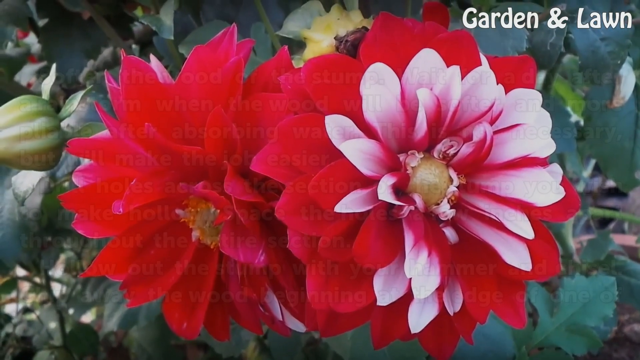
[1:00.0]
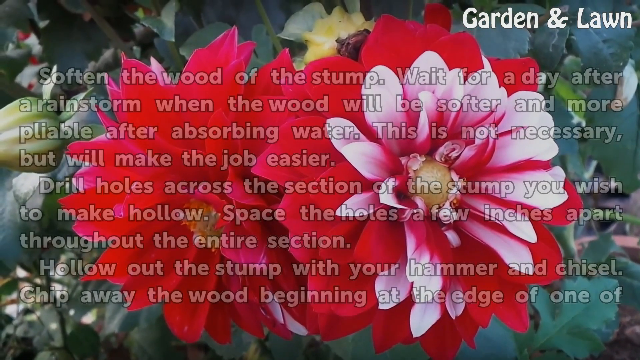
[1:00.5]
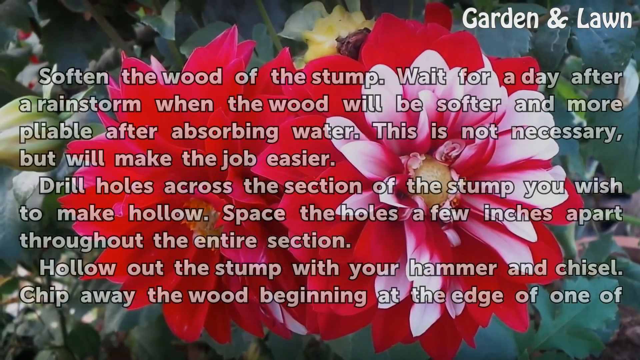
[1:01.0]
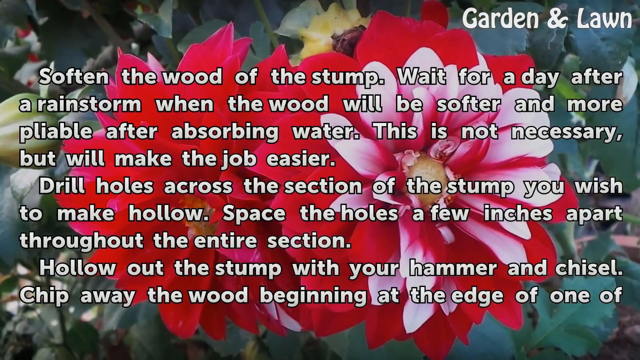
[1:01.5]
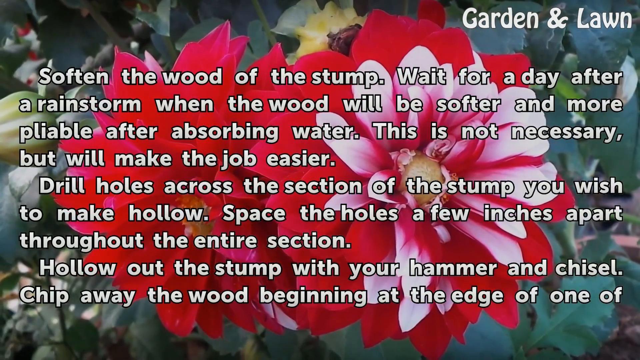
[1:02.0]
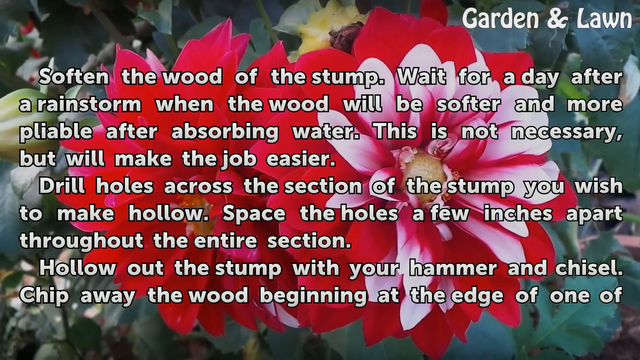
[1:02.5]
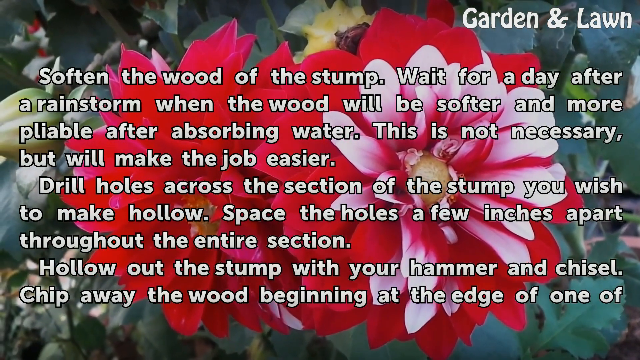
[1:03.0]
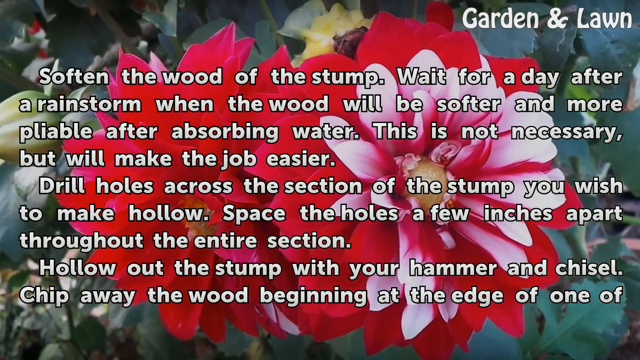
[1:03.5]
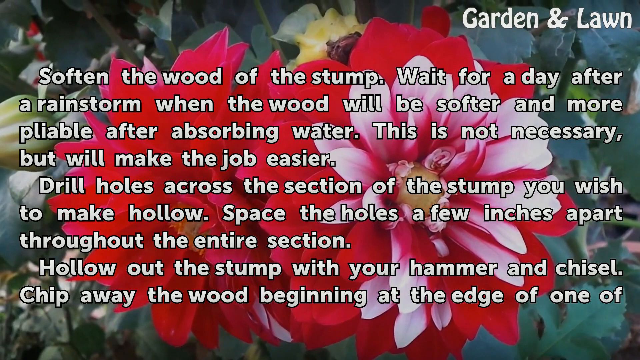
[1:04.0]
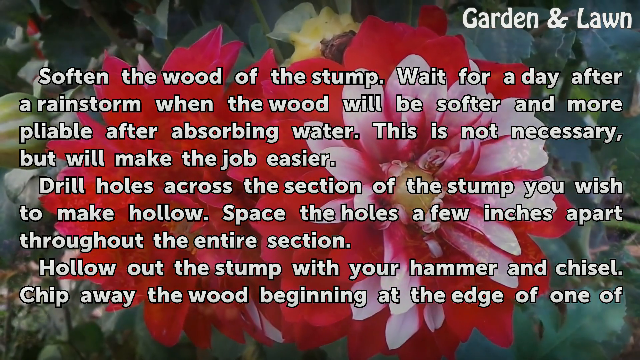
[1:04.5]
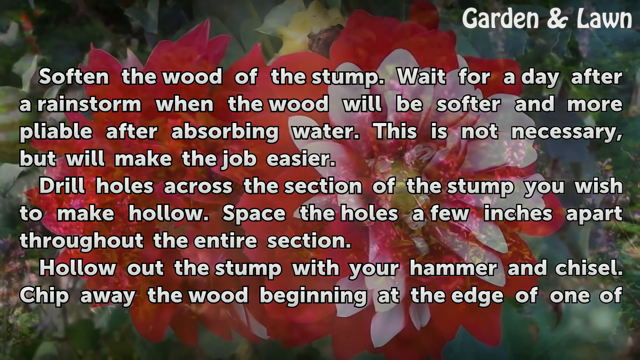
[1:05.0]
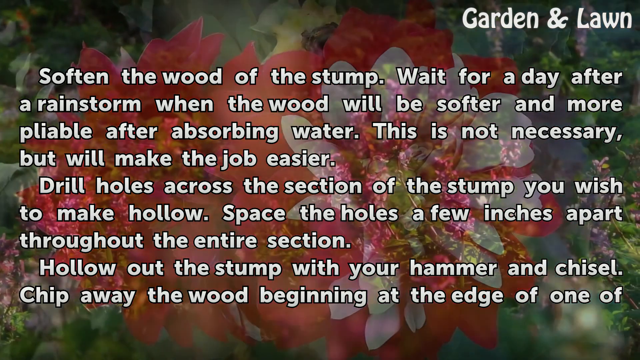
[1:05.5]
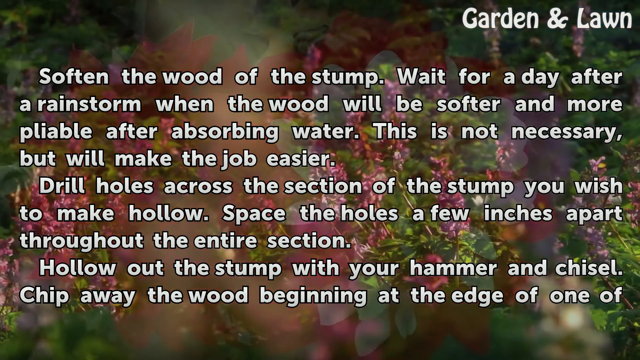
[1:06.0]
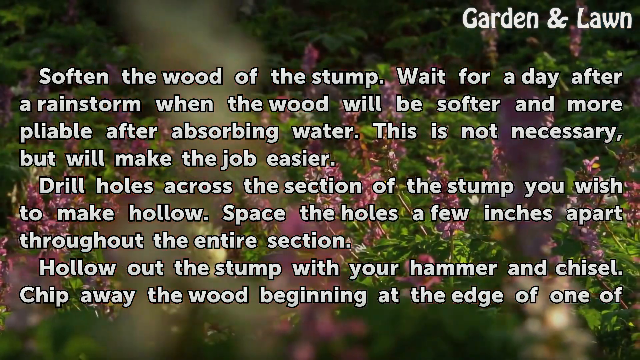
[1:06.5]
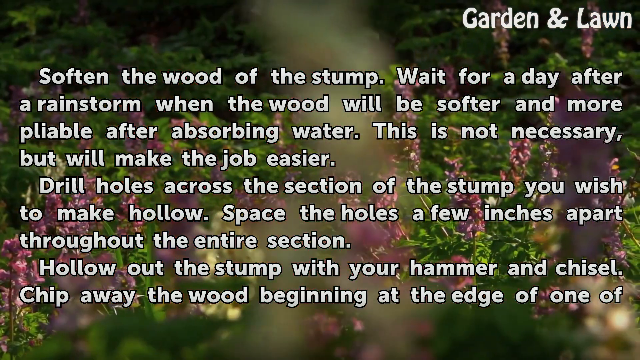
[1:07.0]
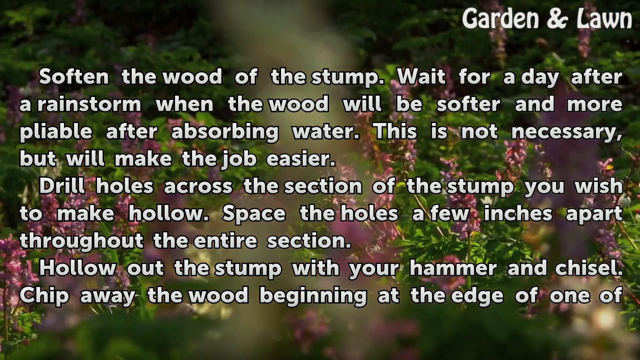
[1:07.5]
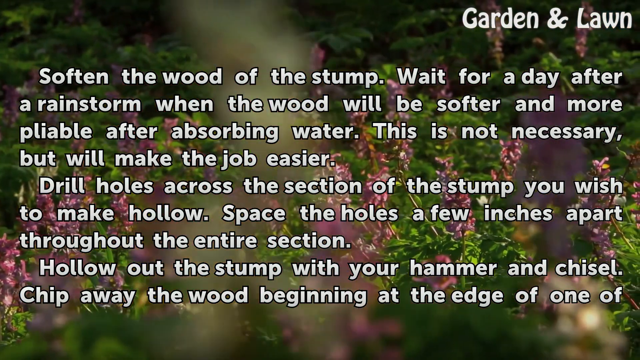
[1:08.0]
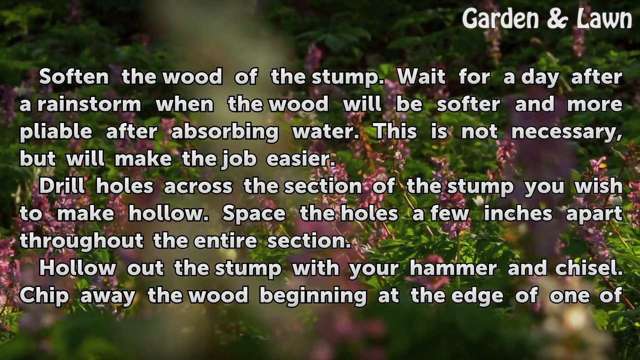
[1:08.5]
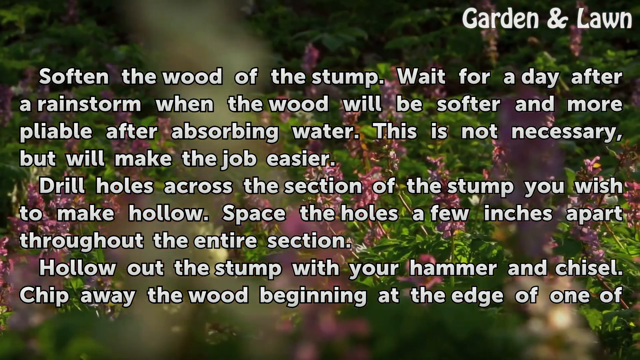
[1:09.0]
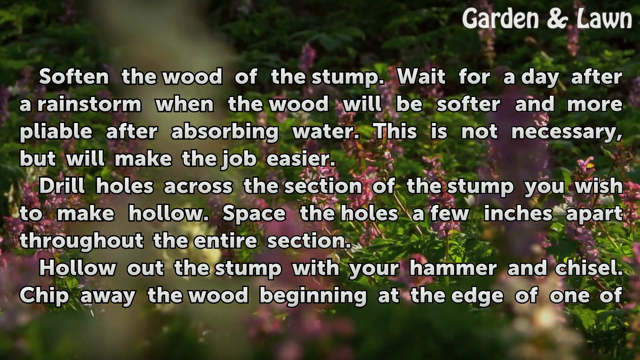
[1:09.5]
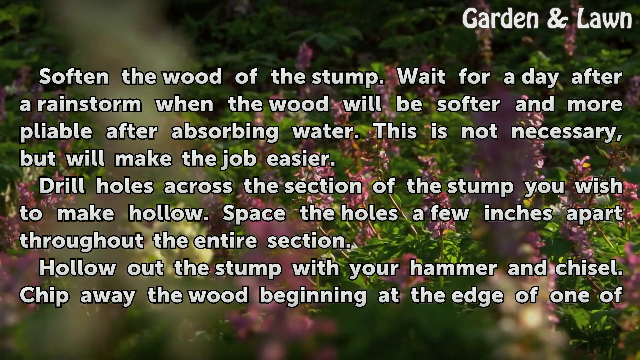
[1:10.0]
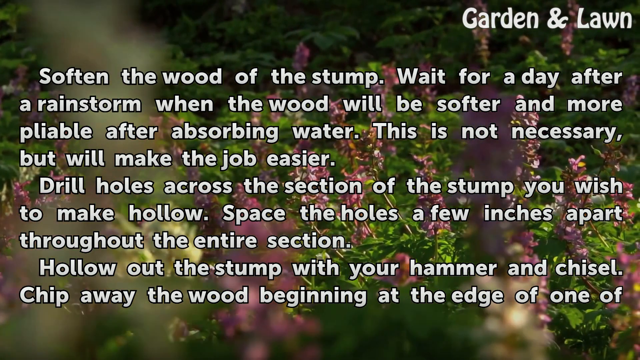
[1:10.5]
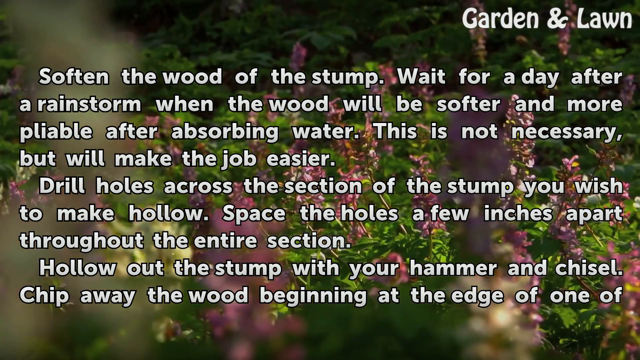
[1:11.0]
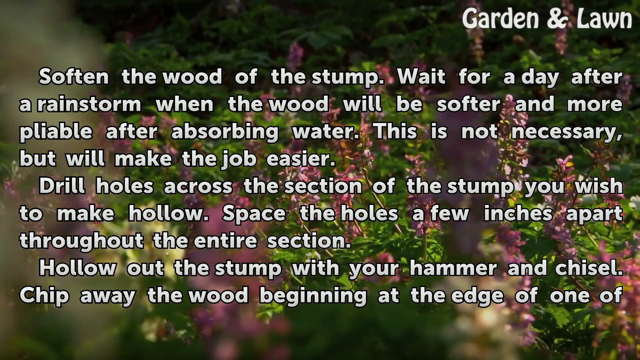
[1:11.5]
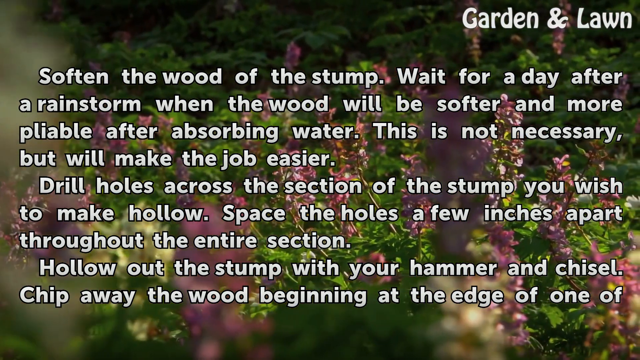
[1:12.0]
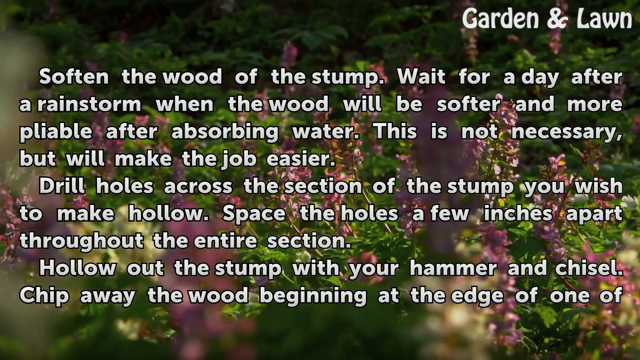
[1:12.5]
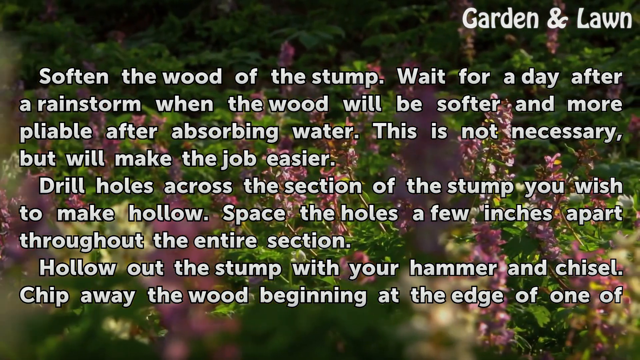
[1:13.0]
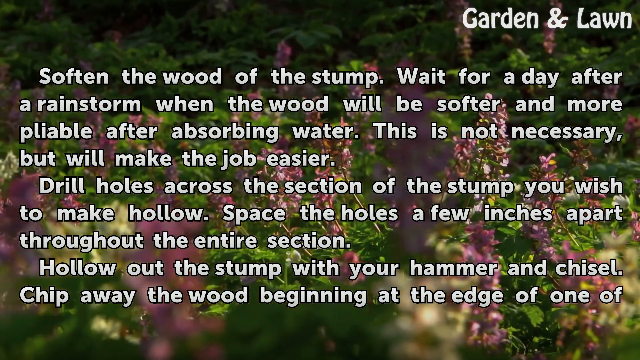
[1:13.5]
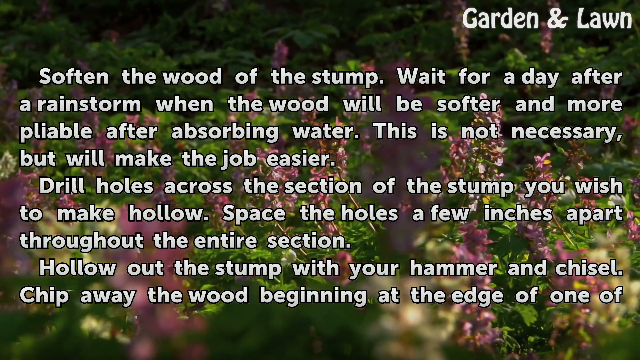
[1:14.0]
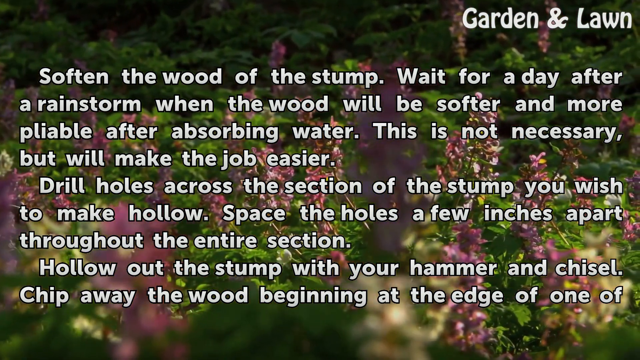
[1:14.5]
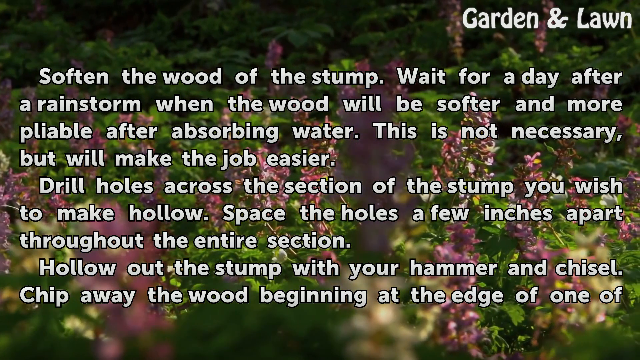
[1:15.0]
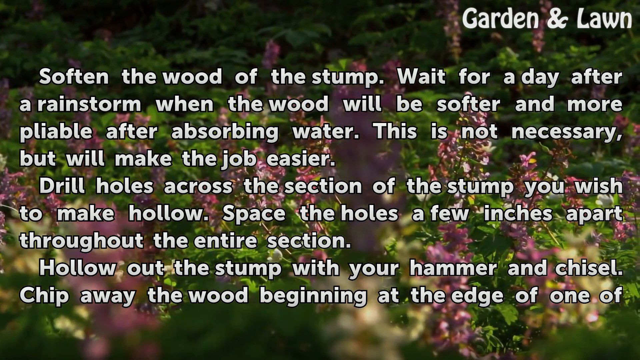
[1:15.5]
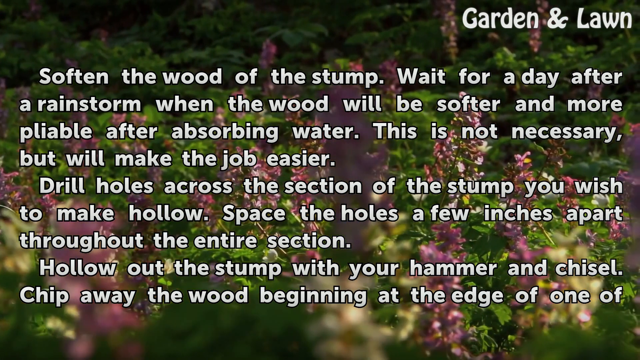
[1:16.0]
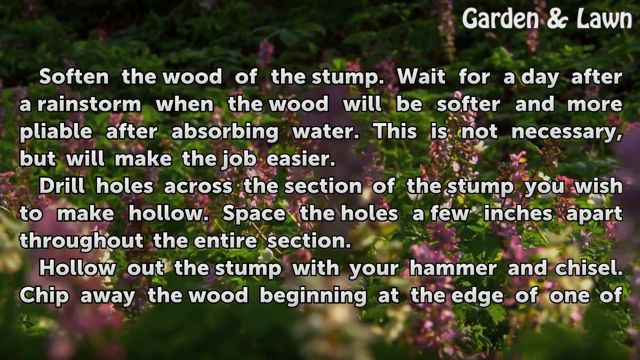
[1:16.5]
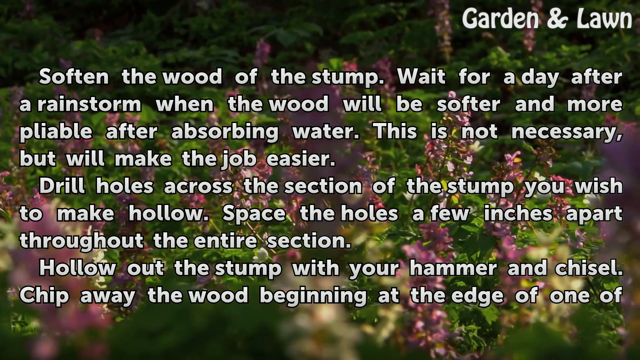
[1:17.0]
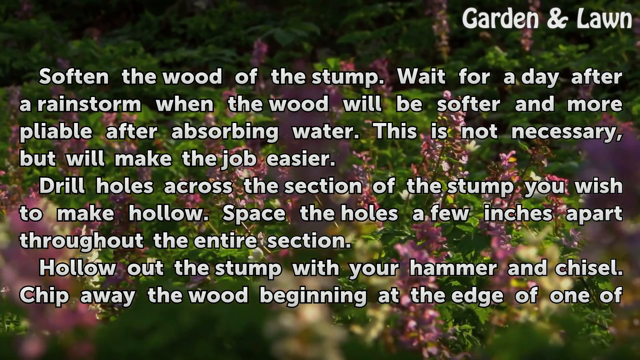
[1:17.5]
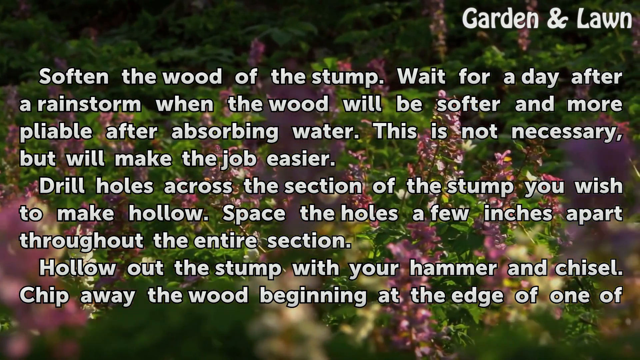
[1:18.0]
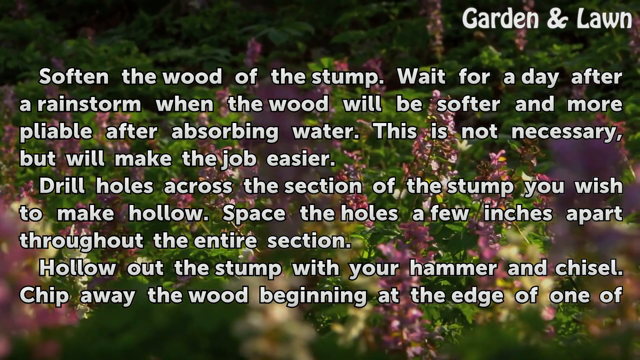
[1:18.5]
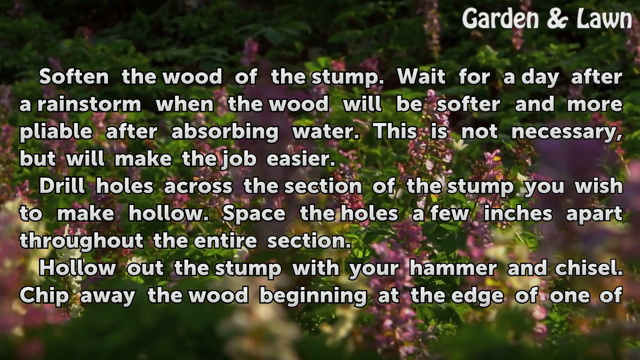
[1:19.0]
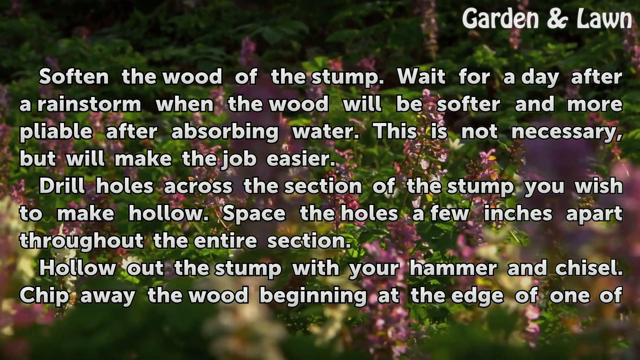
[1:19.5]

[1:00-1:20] A red flower with red and white petals around the center is shown, and a message pops up on the screen about softening the wood of the stump: "wait for a day after a rainstorm when the wood will be softer and more pliable after absorbing the water. This is not necessary, but it will make your job easier. Drill holes across the section of the stump you wish to make hollow. Space the holes a few inches apart throughout the entire section." It continues with using a hammer and chisel and "Chip away the wood beginning at the edge." The flowers in the background keep switching while the same message stays on the screen.